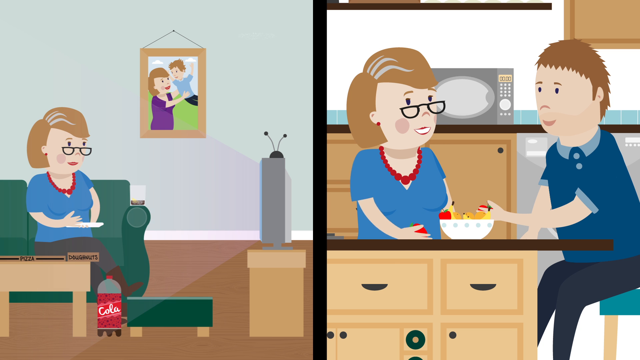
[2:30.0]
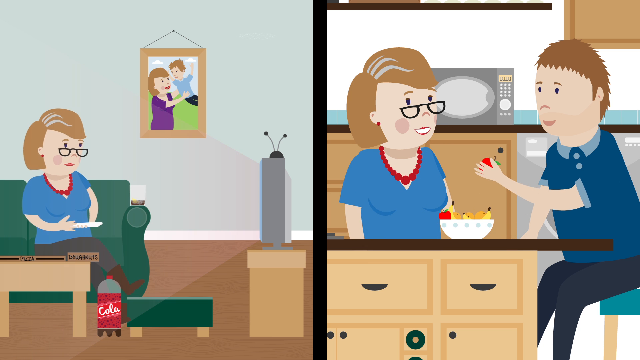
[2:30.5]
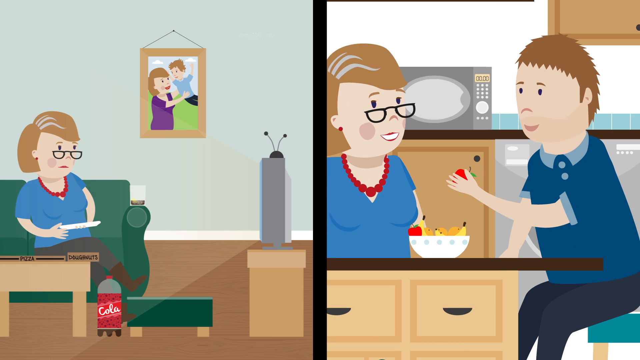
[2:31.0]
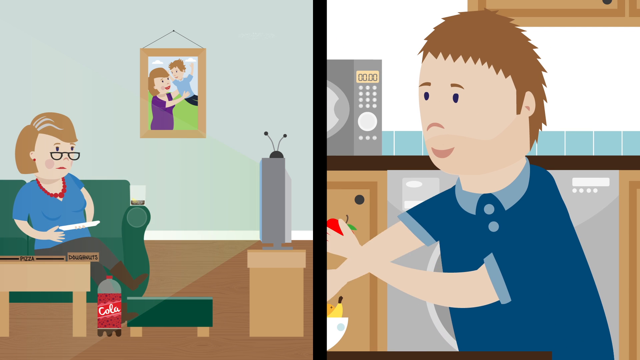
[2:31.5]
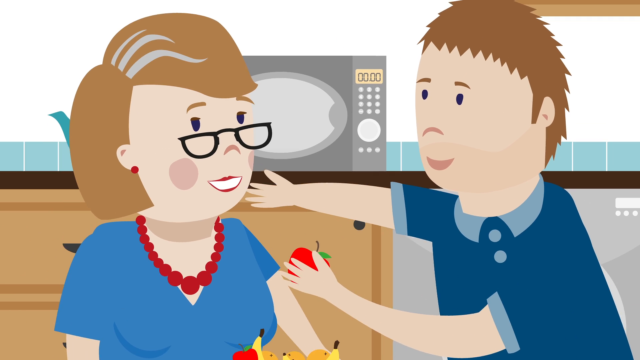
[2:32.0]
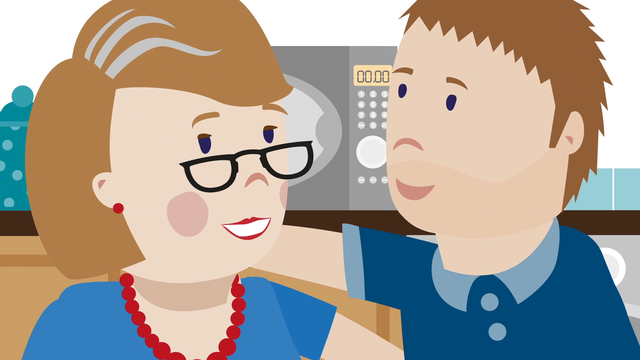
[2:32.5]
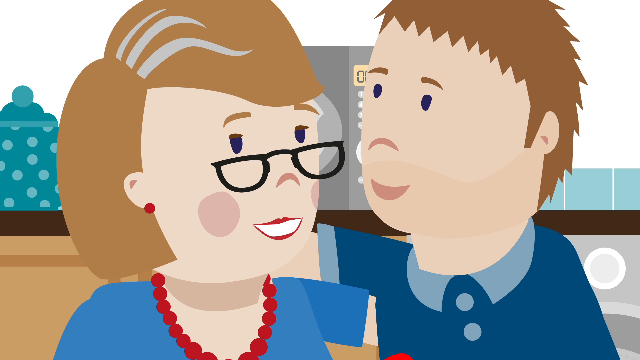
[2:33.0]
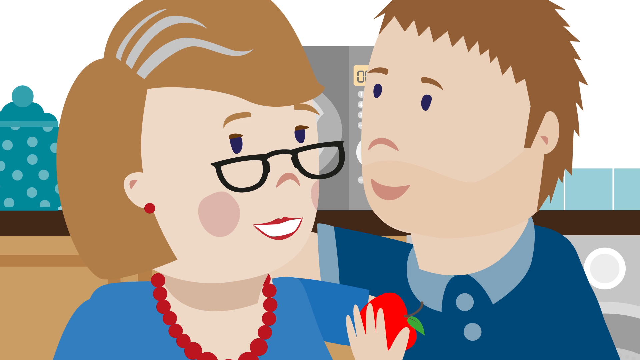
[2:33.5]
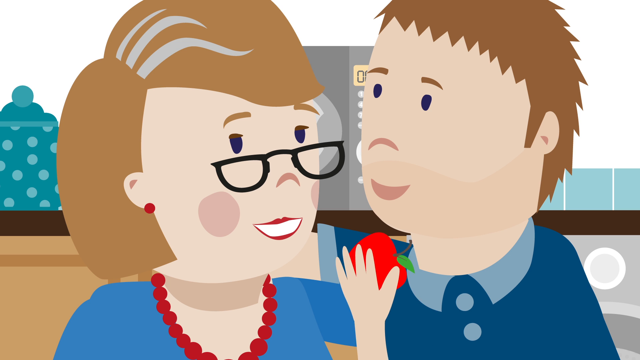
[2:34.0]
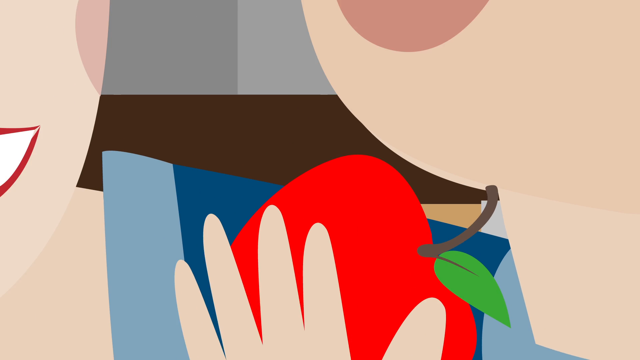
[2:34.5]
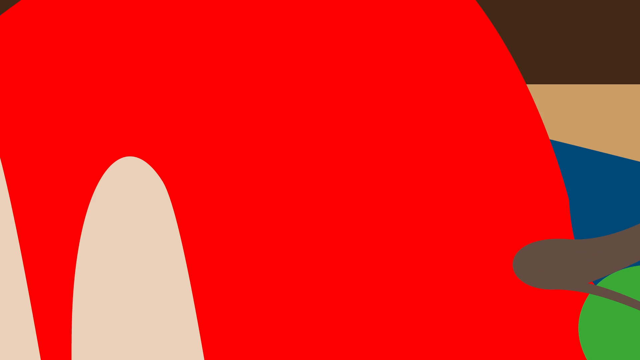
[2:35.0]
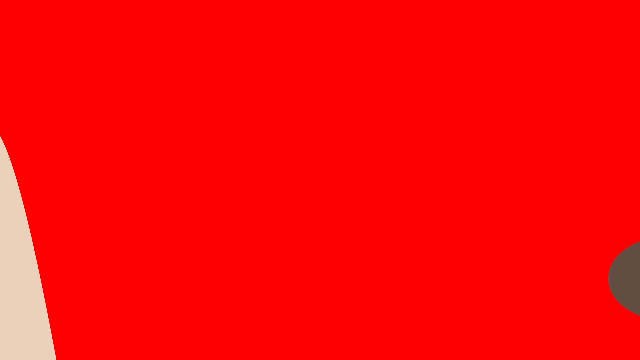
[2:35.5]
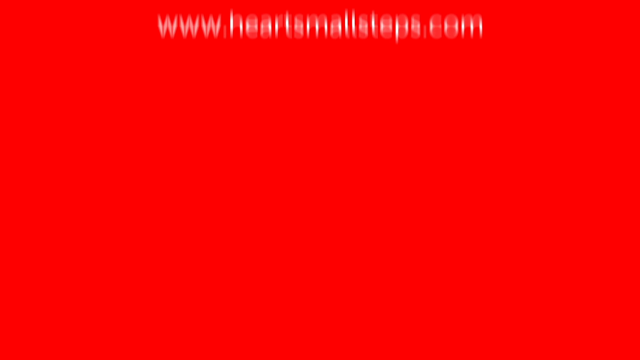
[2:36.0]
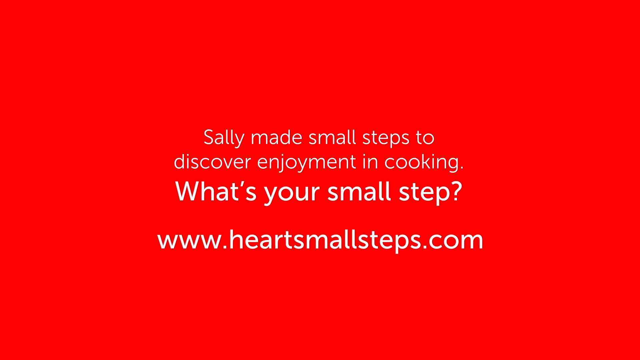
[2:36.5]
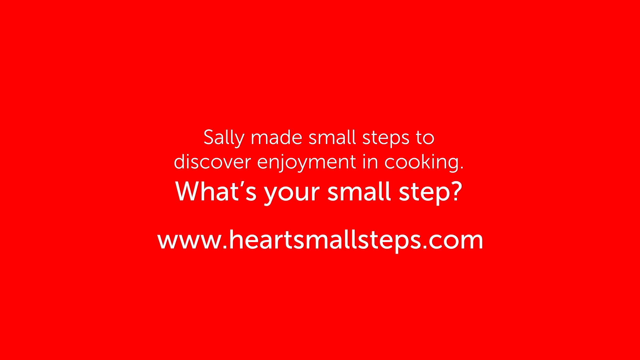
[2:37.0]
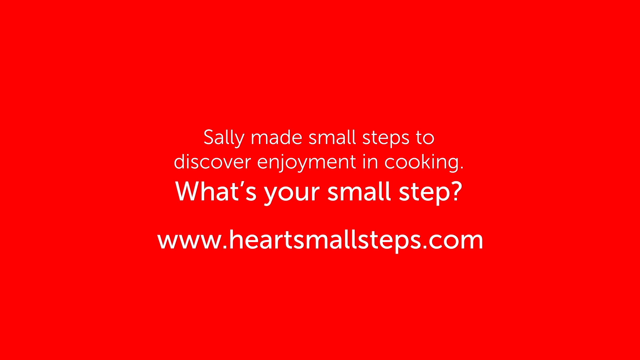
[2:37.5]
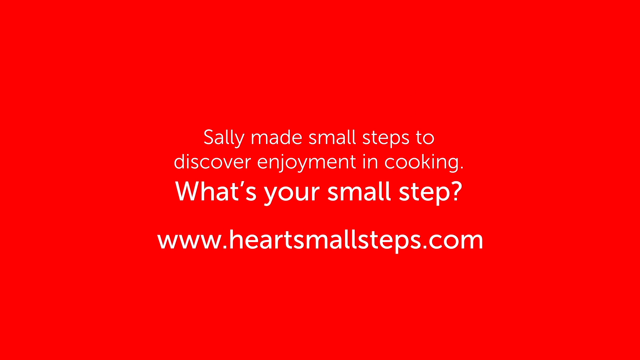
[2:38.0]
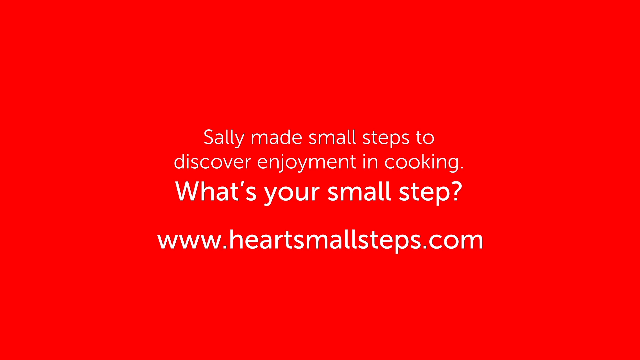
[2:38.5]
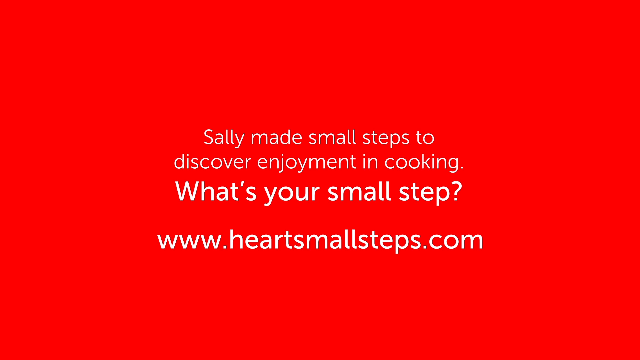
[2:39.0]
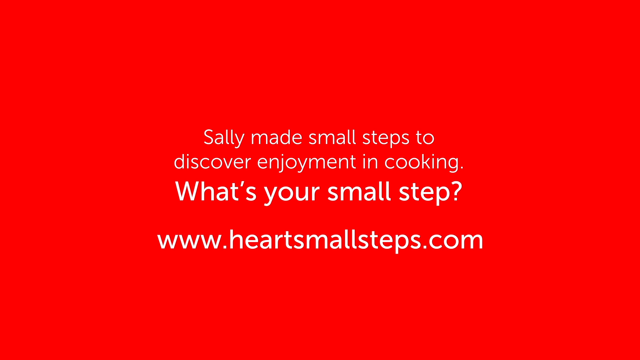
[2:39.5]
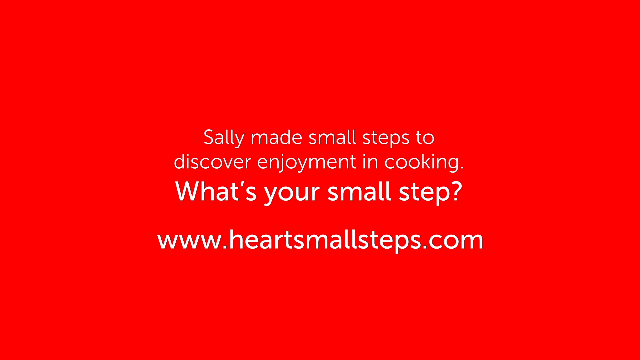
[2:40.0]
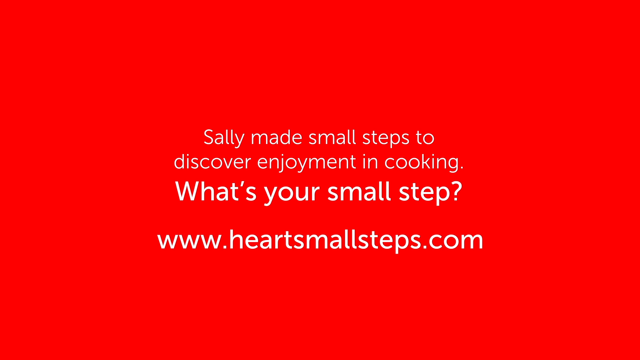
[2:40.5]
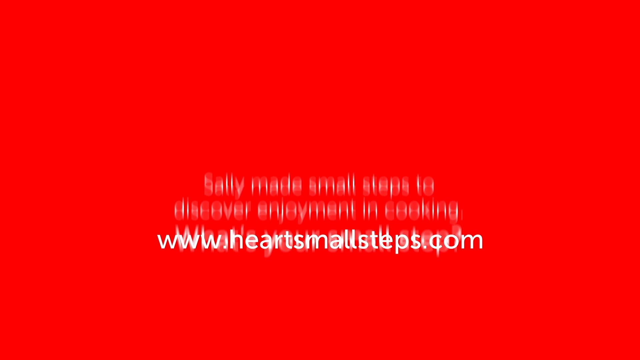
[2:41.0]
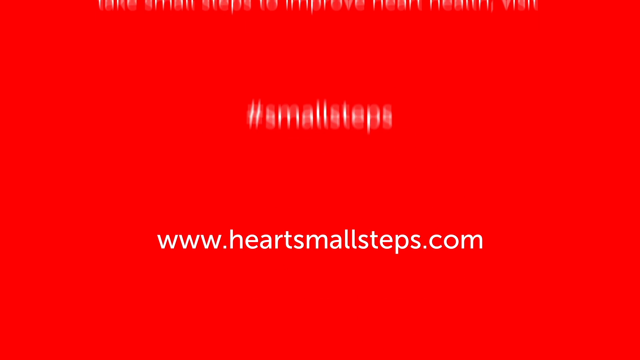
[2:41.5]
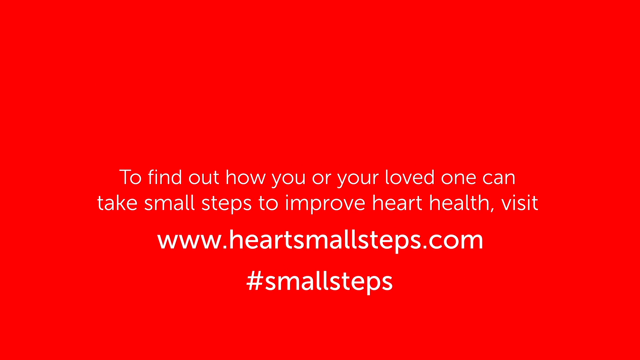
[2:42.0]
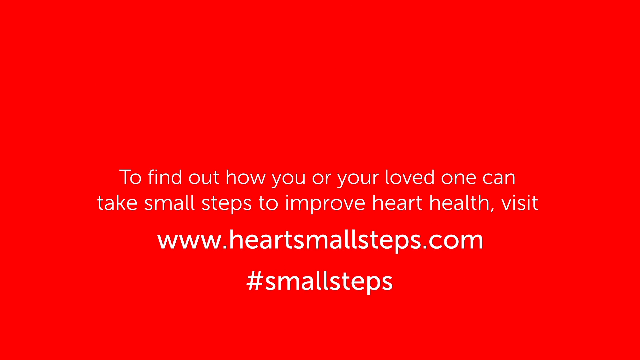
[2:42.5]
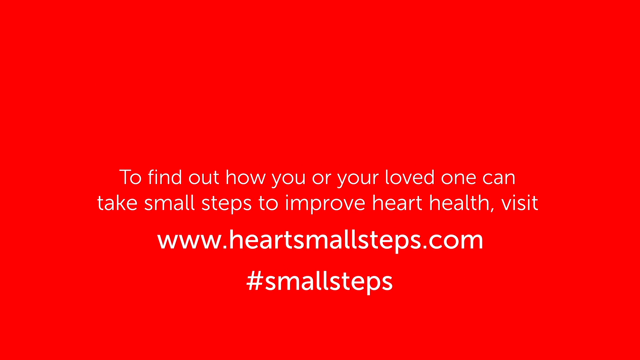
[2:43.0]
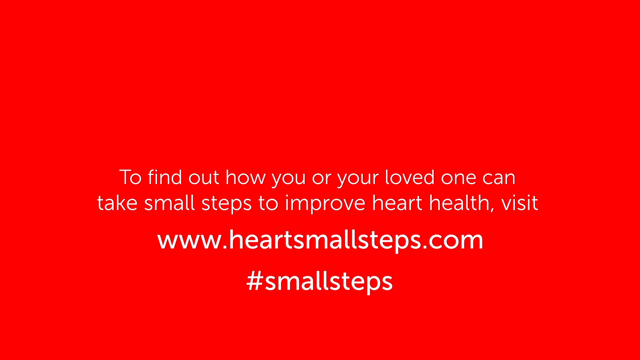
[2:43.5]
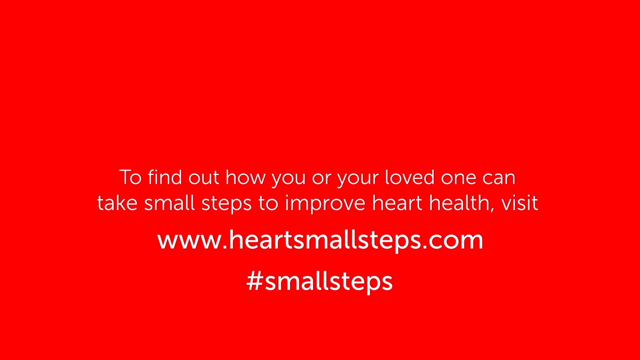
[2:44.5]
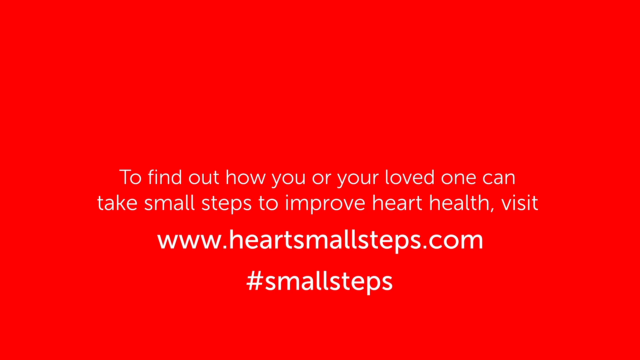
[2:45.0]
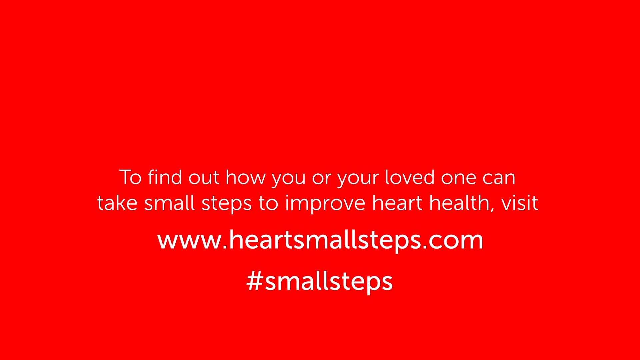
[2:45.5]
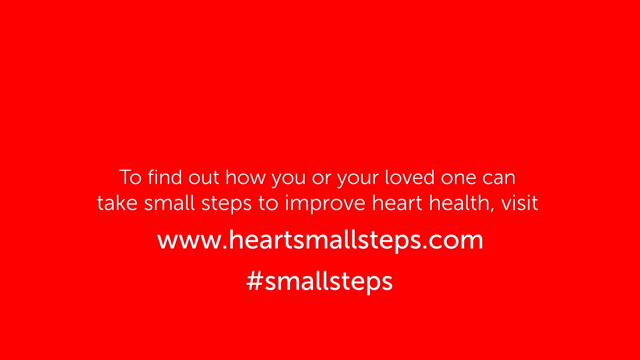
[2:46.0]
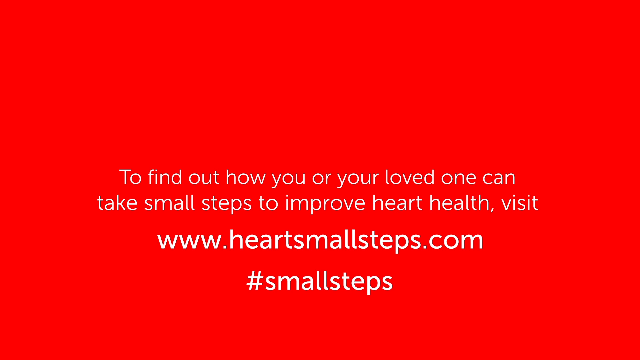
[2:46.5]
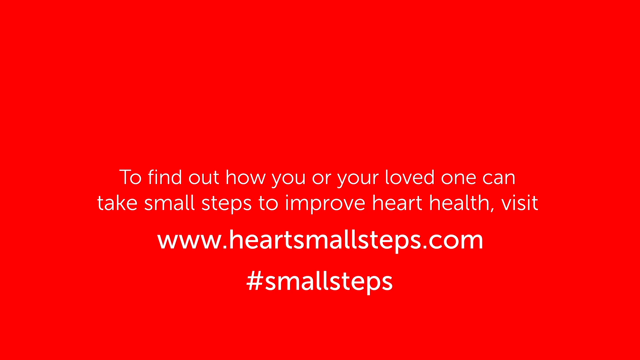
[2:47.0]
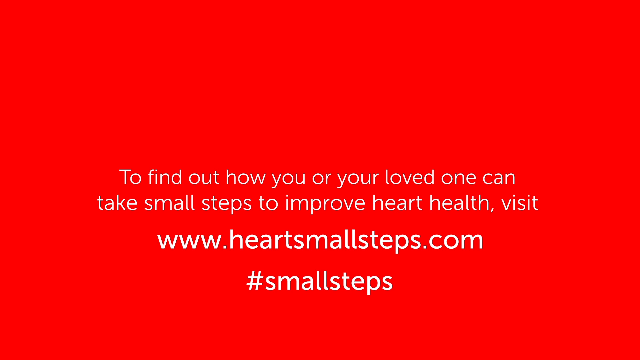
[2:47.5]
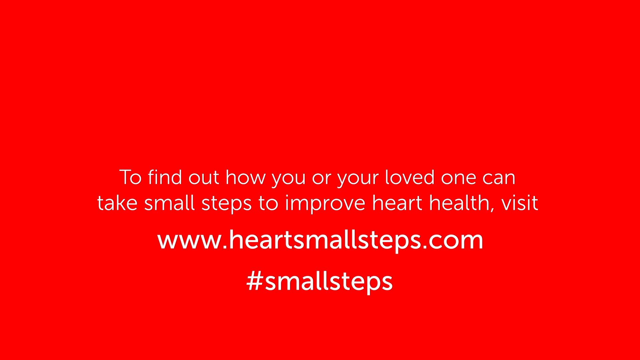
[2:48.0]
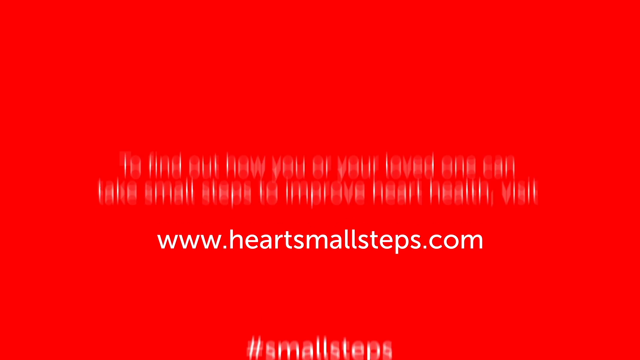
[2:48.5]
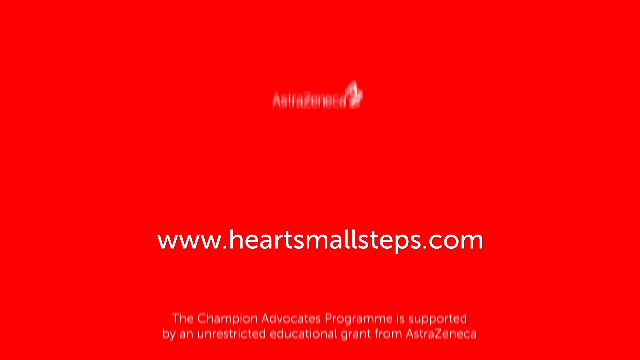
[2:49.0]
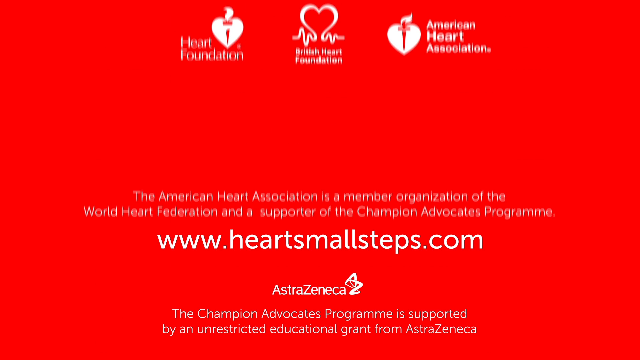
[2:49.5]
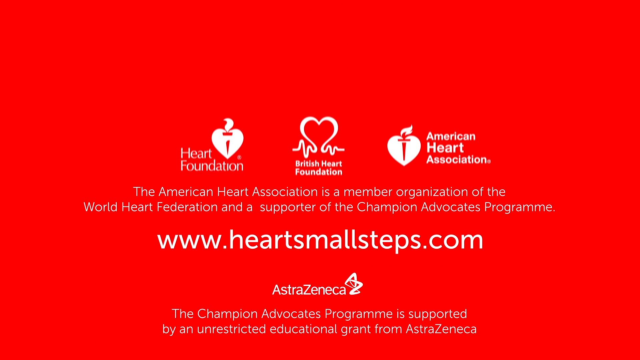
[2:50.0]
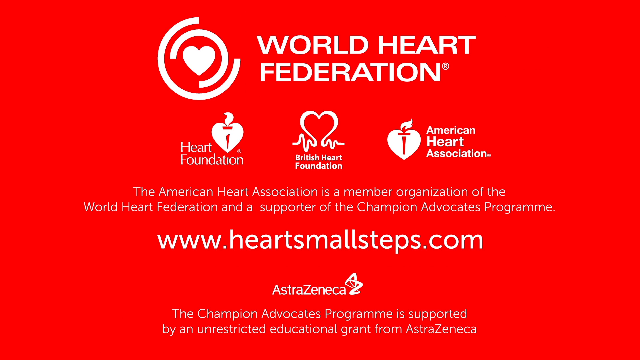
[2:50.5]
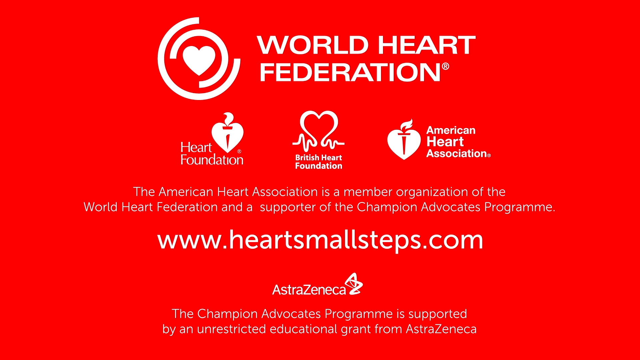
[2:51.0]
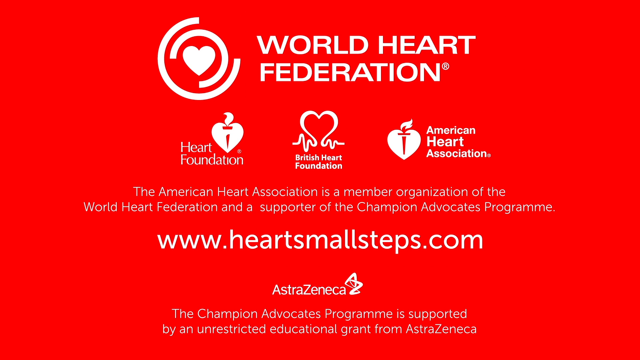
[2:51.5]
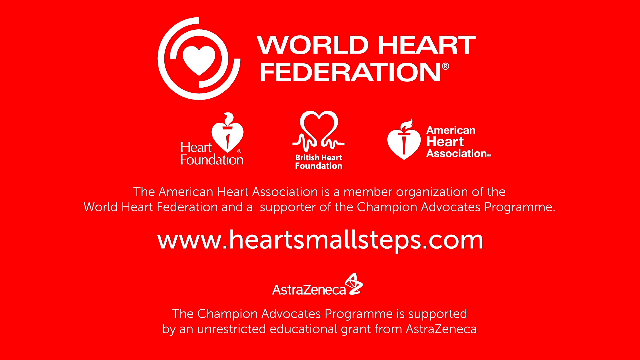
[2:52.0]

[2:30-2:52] A white plate and a bottle of cola with a red label are on the floor. The right side shows the lady in a blue dress and red pearls, holding what might be apples in her hand, with bananas in a white bowl on the counter island stove setup. The walls are white with a little blue tile behind the microwave on the counter. The counter is a brown-black color, the cabinet doors are brown or light tan with a brown border, and the island is light tan with a brown border and black handles. The son is on the right side of the mom at the table island, wearing a blue shirt and dark blue pants, with the gray microwave on the counter behind them. A boy holds an apple, followed by a close-up of the apple. The screen then changes to a red background with white lettering reading "Sally made small steps to discover enjoyment in cooking. What's your small step?" along with the web address "www.heartsmallsteps.com". It then reads "to find out how you or your loved one can take small steps to improve heart health. Visit" followed by the same web address, "heartsmallsteps.com".